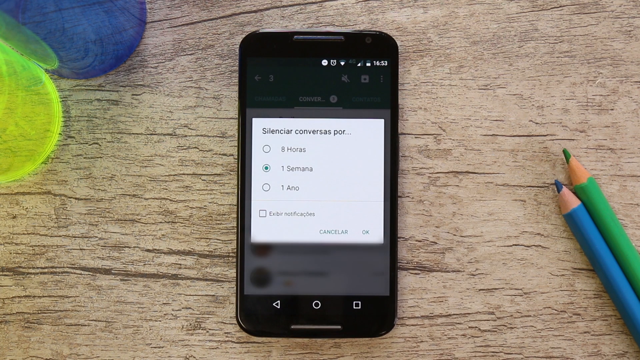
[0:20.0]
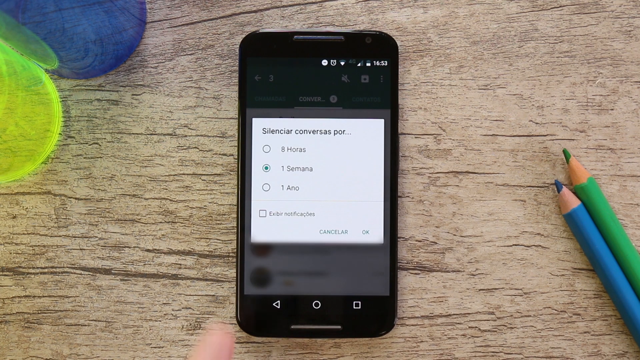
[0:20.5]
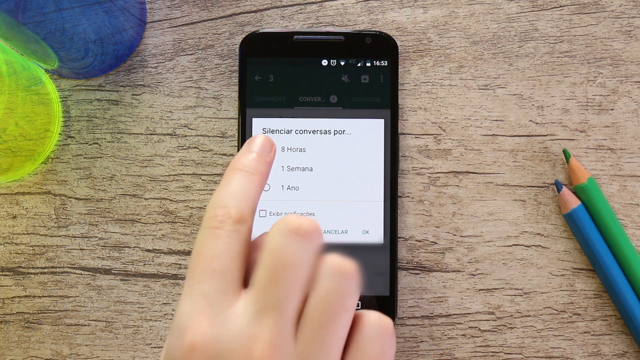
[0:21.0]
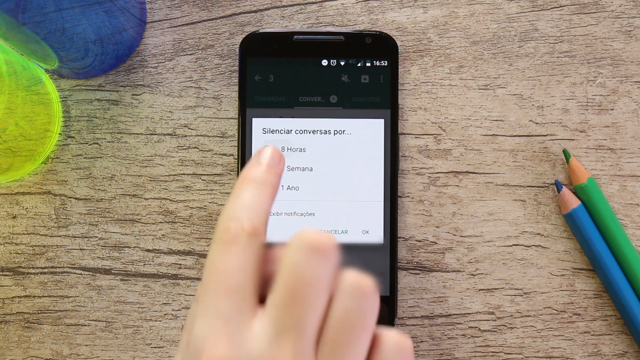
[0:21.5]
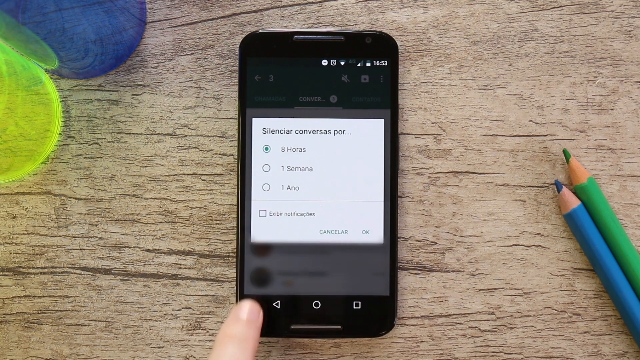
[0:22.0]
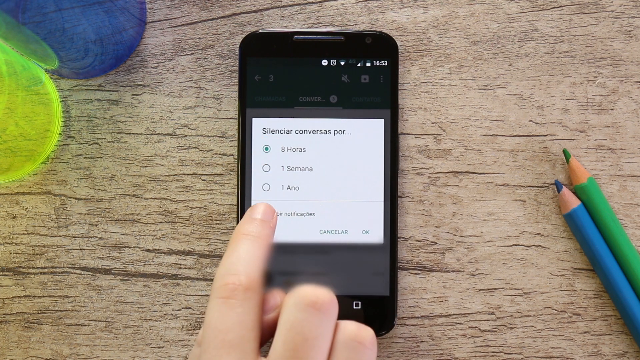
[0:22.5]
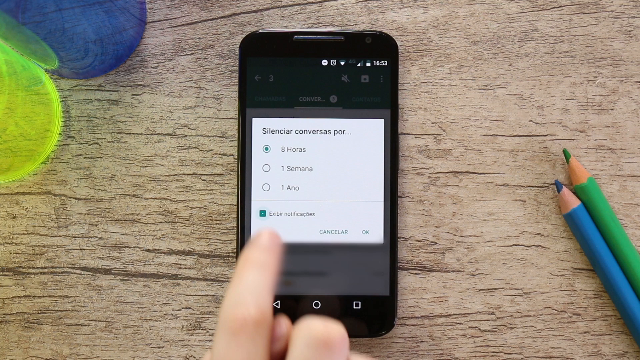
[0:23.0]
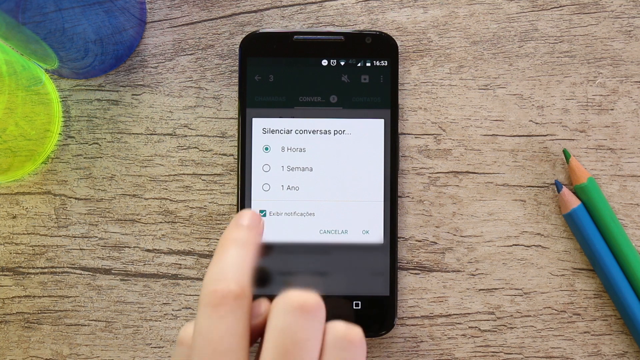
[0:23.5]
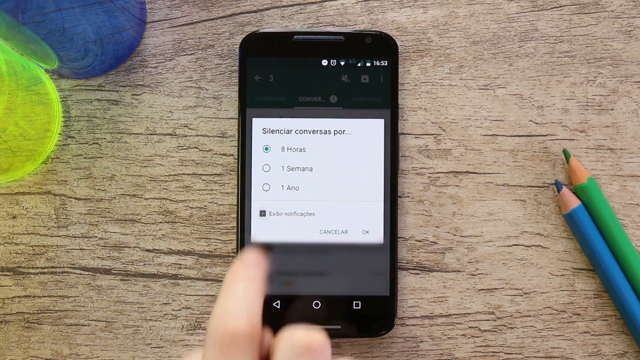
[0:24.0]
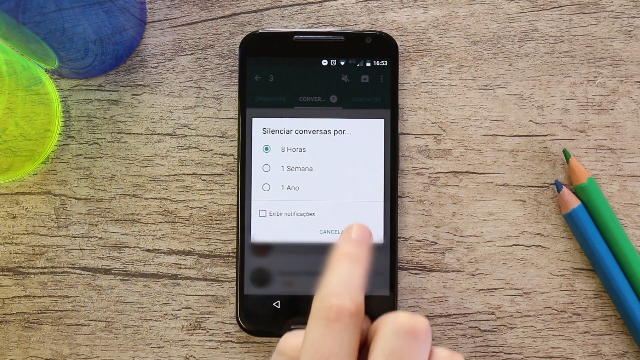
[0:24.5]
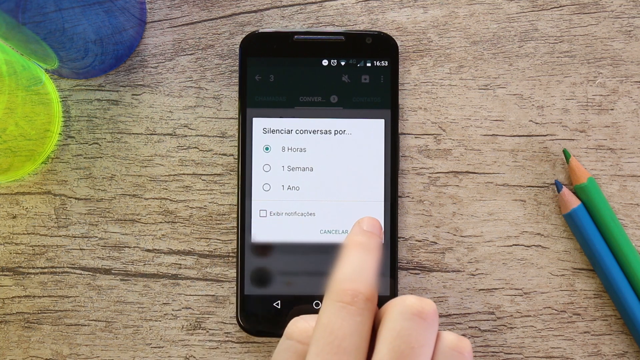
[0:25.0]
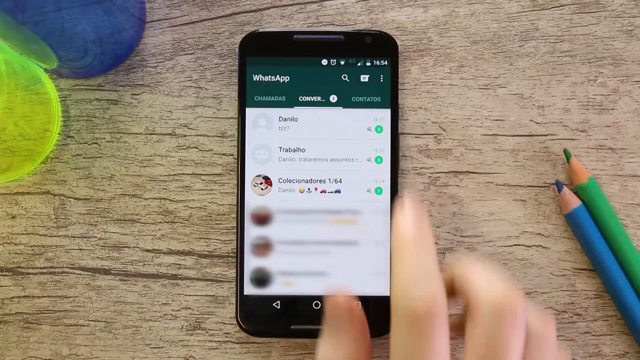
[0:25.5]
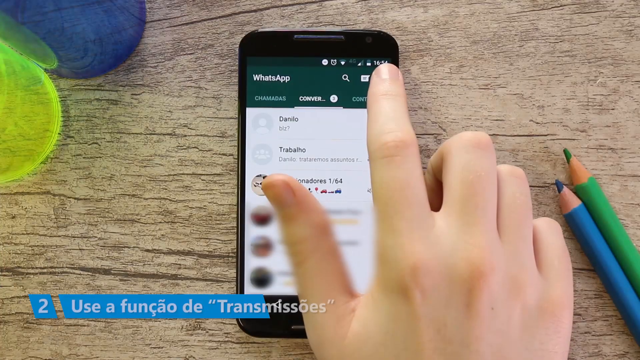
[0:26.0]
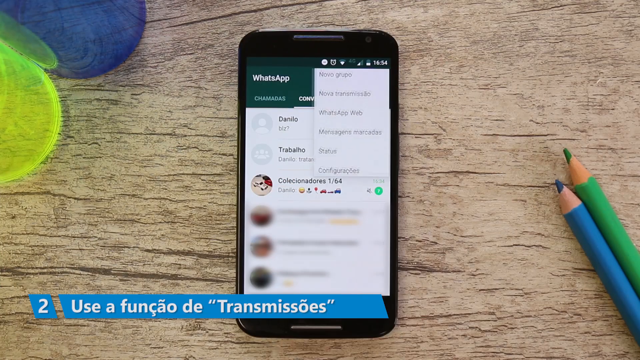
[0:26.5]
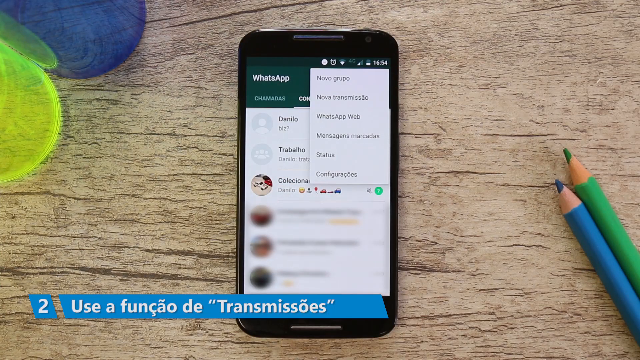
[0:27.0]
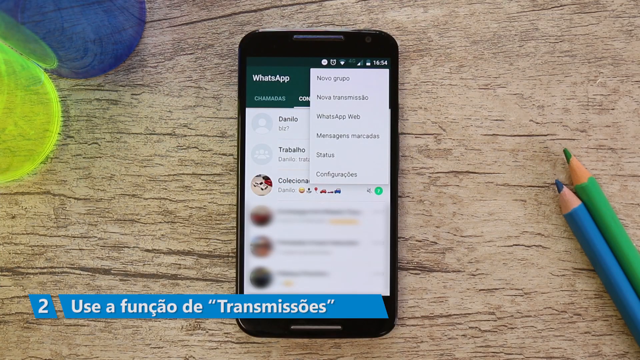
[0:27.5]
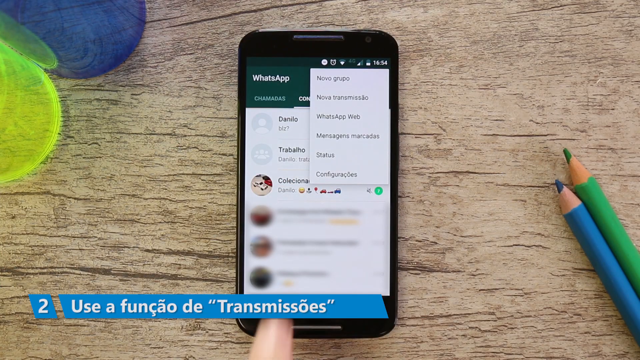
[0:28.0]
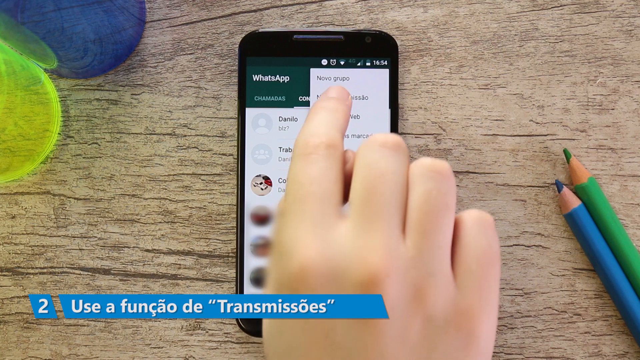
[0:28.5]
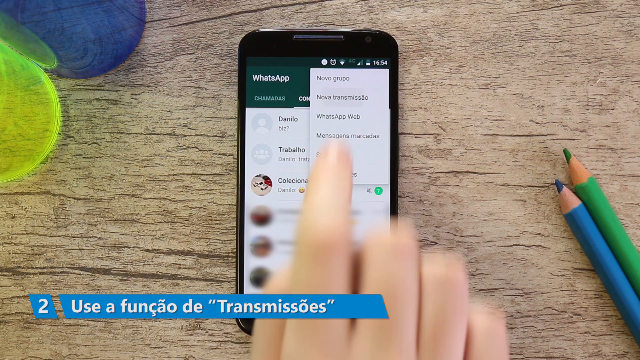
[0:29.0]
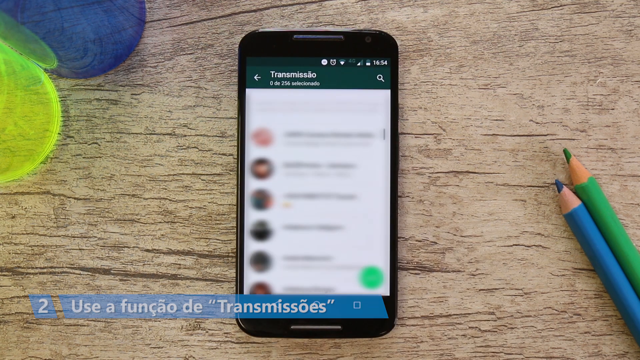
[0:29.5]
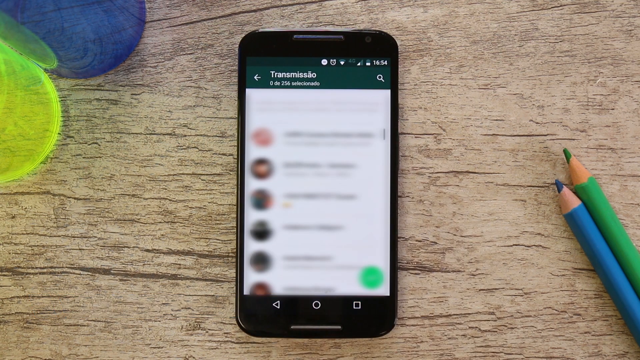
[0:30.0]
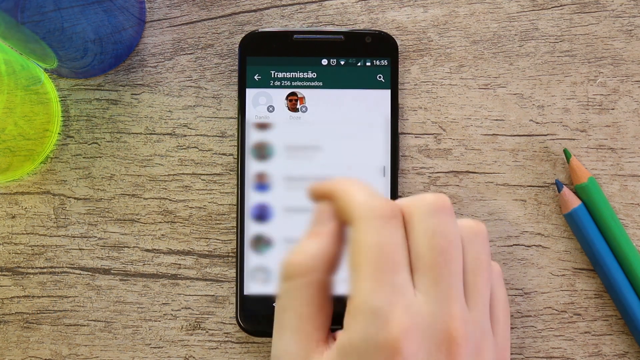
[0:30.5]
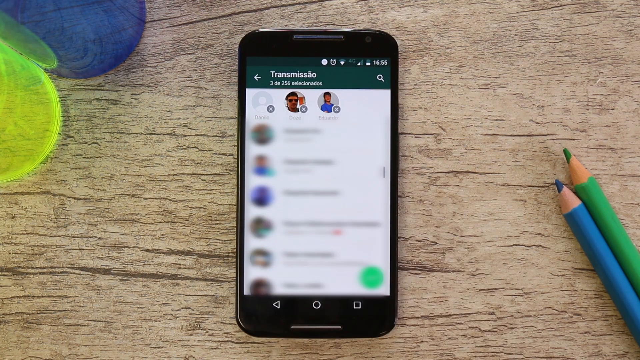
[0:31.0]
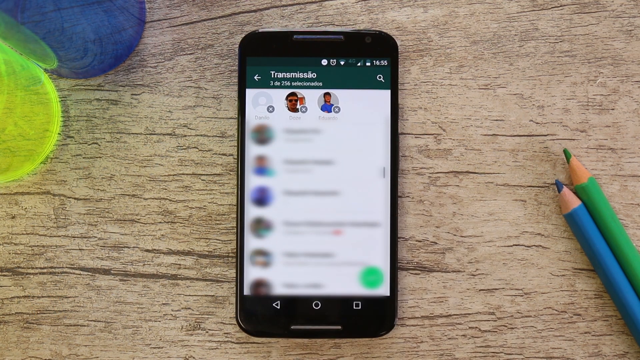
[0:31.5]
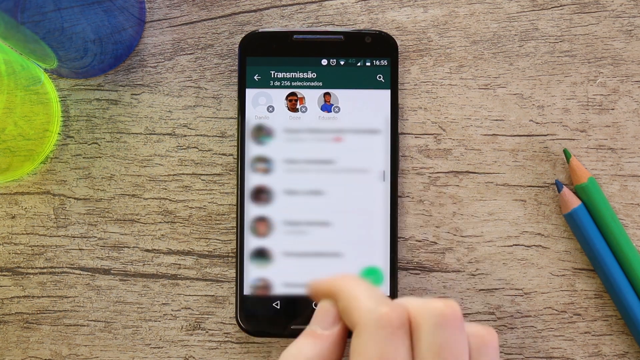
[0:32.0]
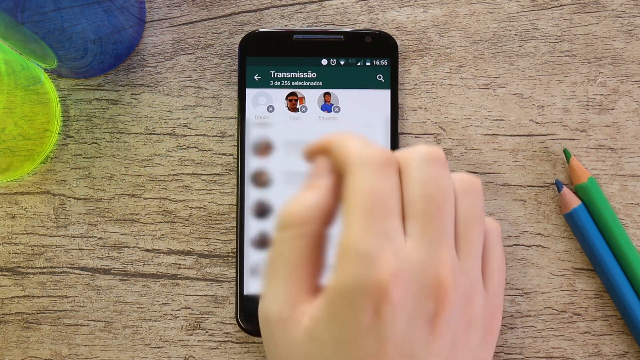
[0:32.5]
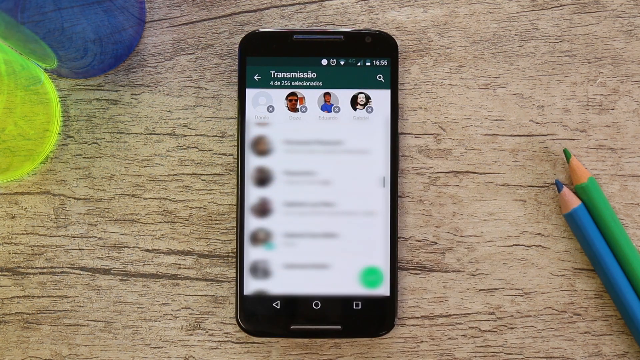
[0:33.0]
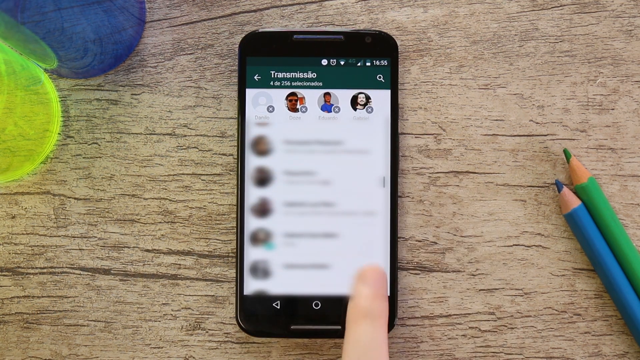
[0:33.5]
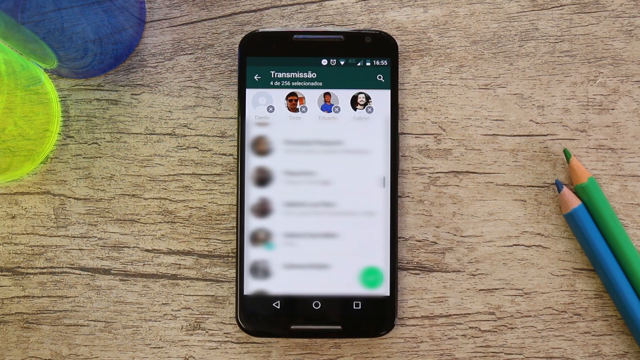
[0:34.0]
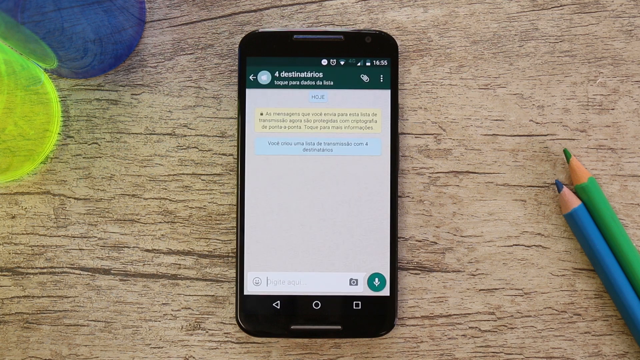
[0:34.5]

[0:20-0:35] The person taps on "8 horas" as well as email notifications in the app. They tap the three white dots at the top right of the app and go through different menu items, apparently adding different people from their contacts, silencing conversations for 8 hours. In the bottom left of the screen, a blue bar shows the number two and reads "use a Funcal de Transmision". The black iPhone is on what looks like a wood green or cork background. The person taps email notifications on and off and keeps going to the silence options, which include "8 horas" and "One Semana" among others. The person is possibly adding a new group of people to silence.